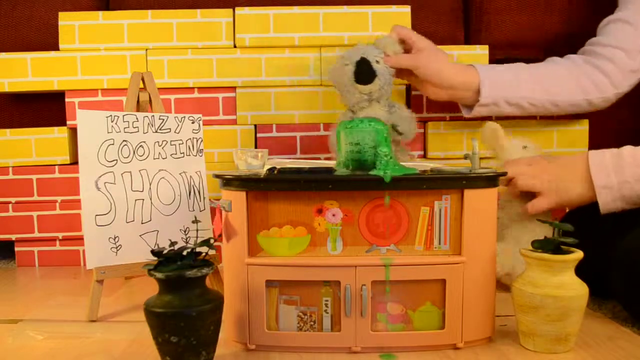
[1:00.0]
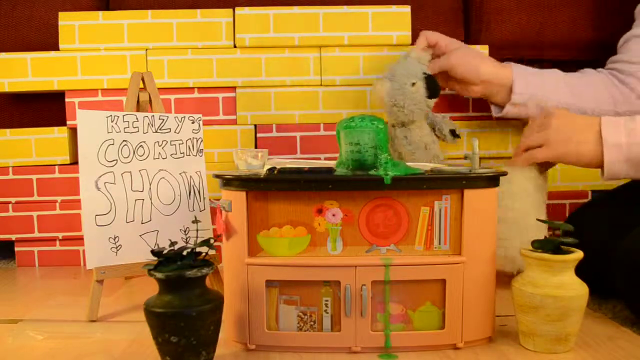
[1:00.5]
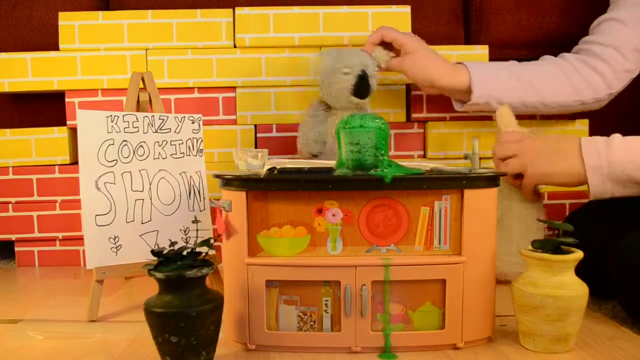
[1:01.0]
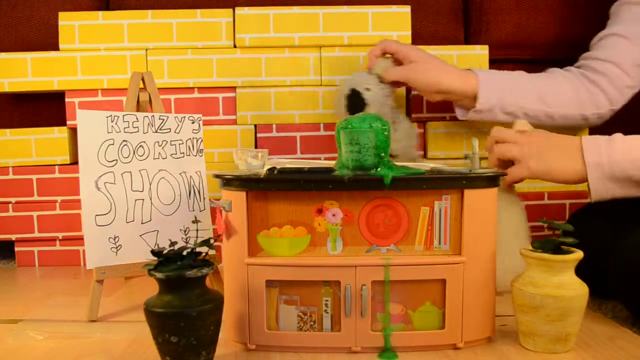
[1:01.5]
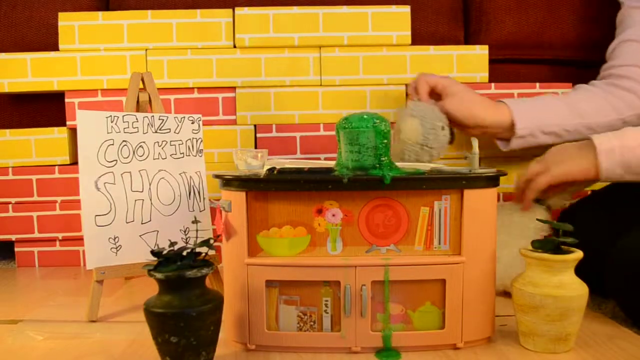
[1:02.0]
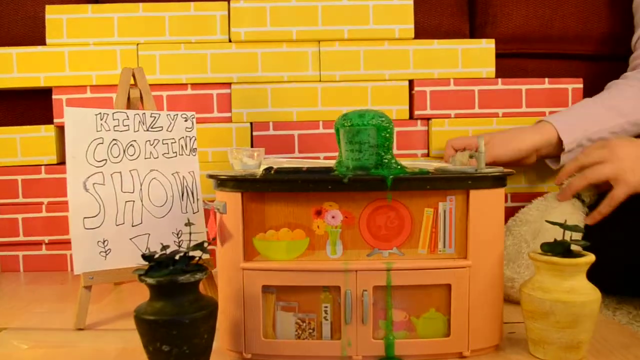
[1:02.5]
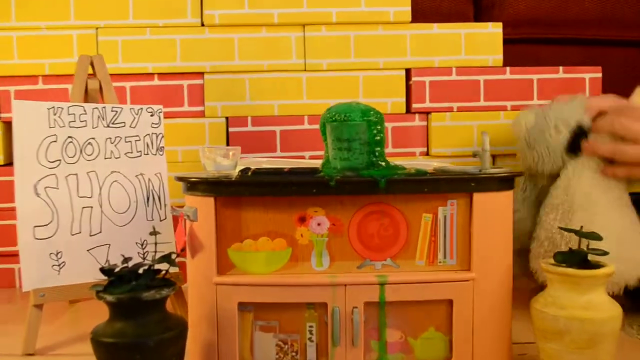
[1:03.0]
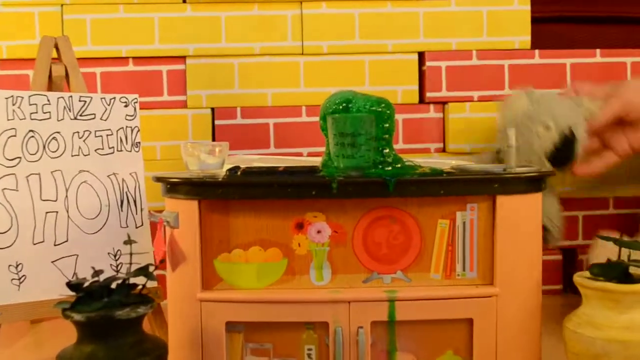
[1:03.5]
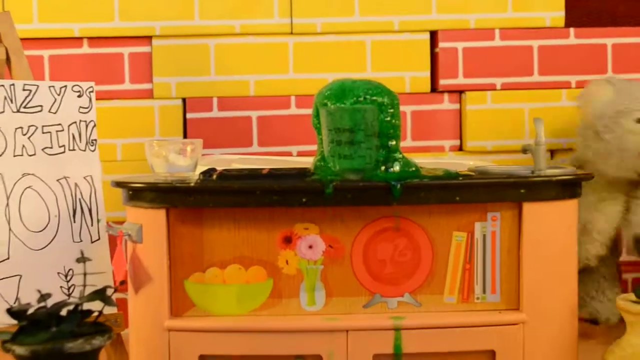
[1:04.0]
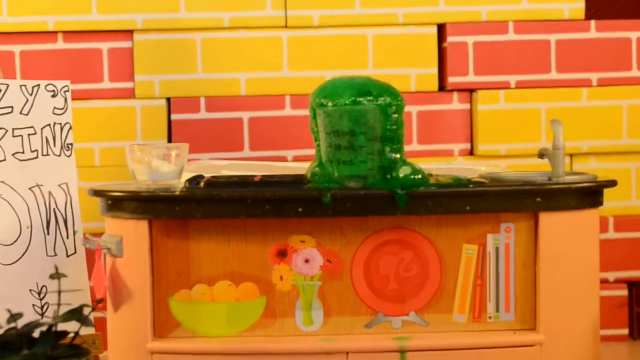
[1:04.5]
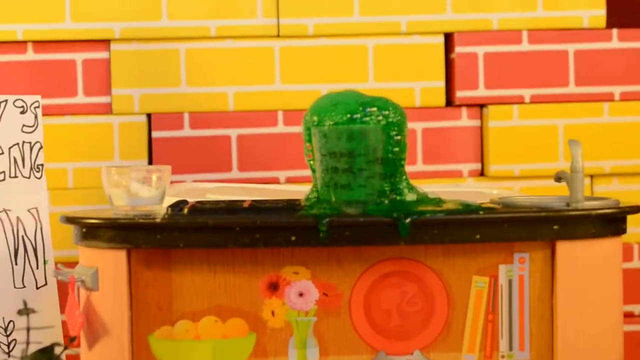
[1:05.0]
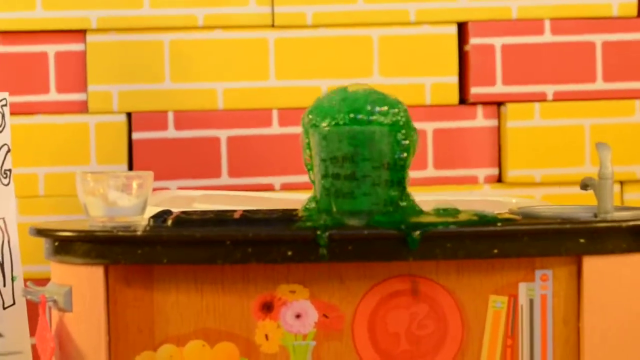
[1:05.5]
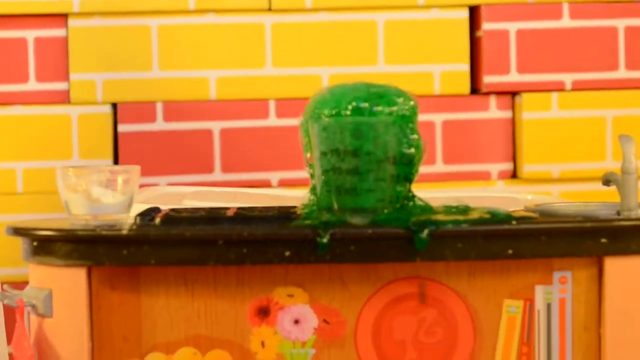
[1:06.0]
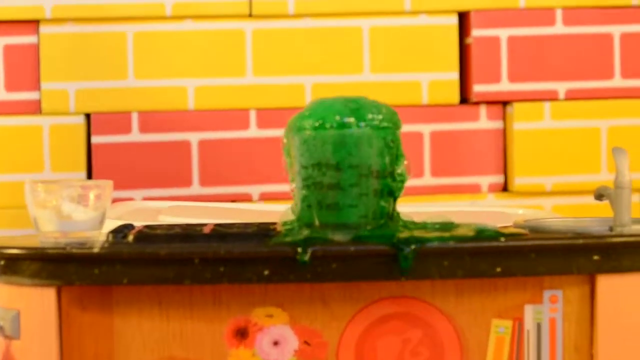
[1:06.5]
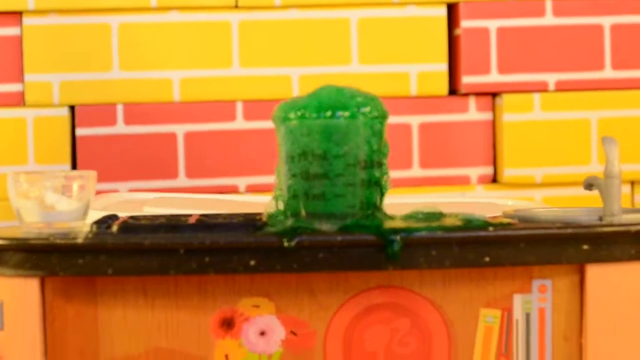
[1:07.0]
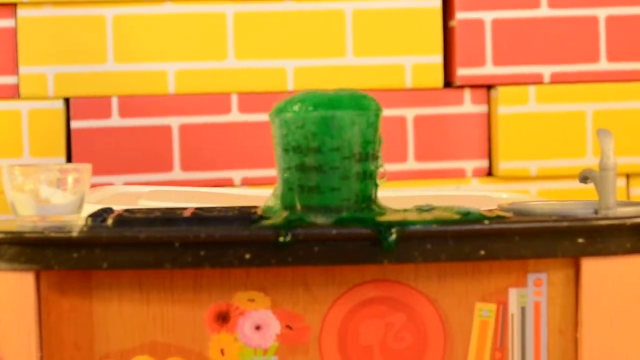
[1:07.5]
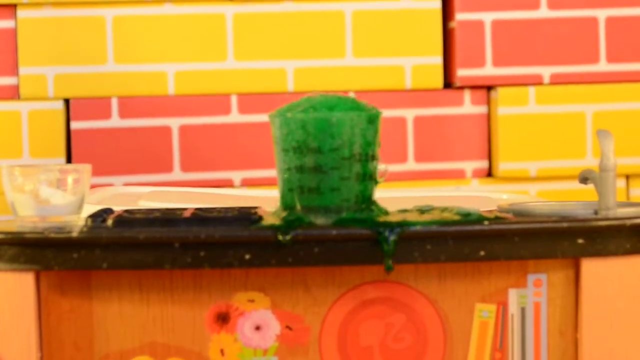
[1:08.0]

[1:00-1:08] On the left side is a board reading "Kinsey's Cooking Show" in black writing on a white background. The board rests on a brown wooden ladder. Behind the ladder is a brick wall with yellow bricks at the top, red bricks in the middle and red bricks at the base, and white lines separating the yellow bricks. In the middle is a cupboard, and on top of it are a bowl of salt and a jar. The hand adds the white substance to the green substance, which starts foaming, and the foam overflows onto the top of the cupboard. Inside the cupboard are plates, including a red plate, and a vessel of yellow, red and purple flowers. Beside it is a green bowl with yellow fruits on top, and on the right are recipe books in yellow, red and white.